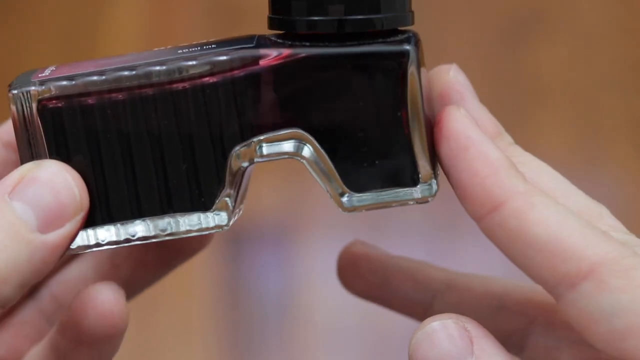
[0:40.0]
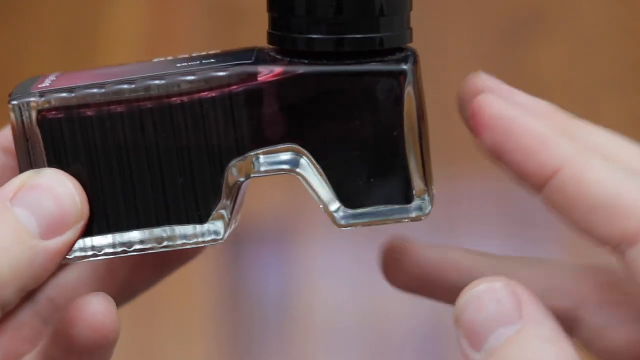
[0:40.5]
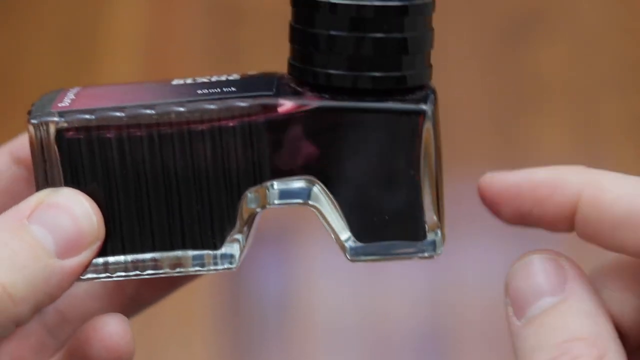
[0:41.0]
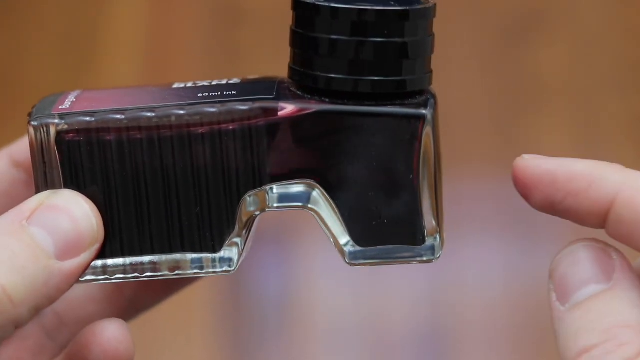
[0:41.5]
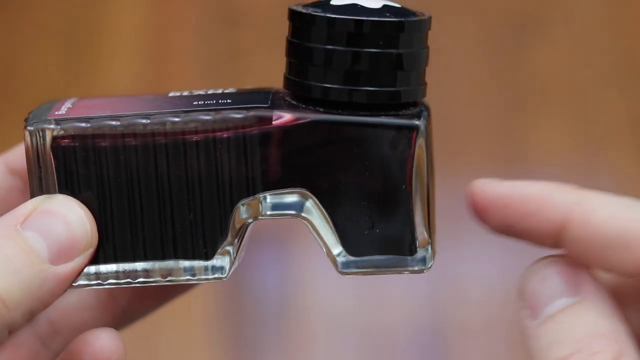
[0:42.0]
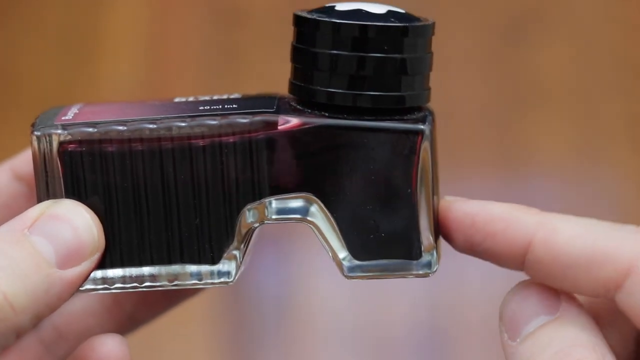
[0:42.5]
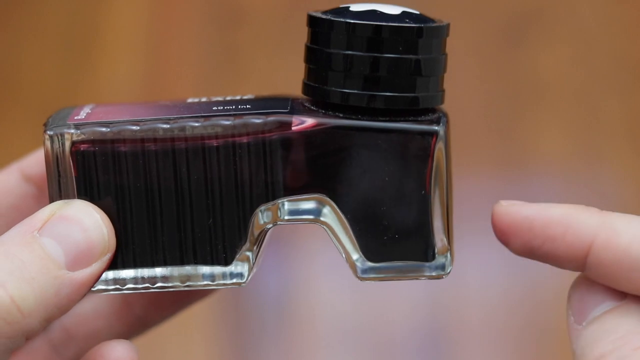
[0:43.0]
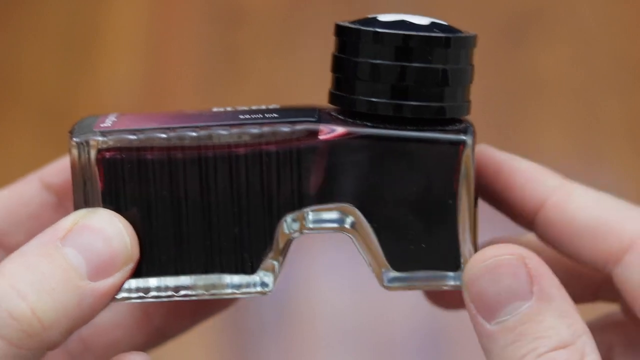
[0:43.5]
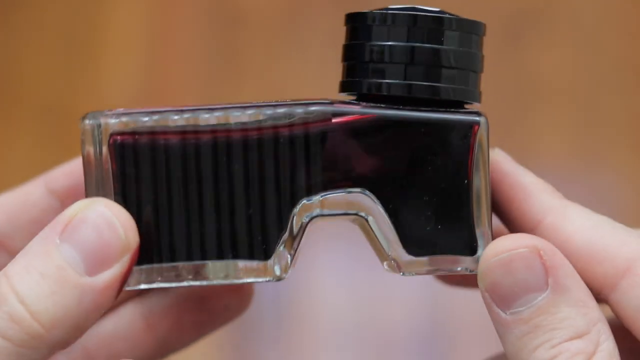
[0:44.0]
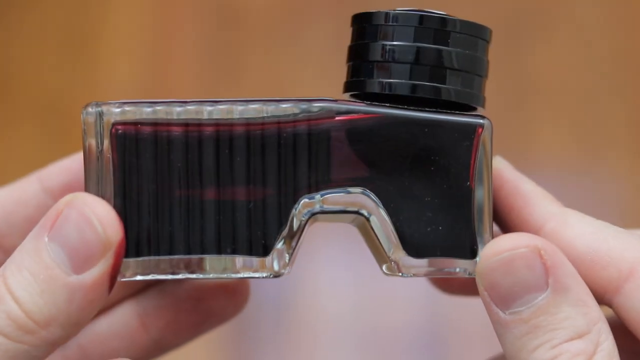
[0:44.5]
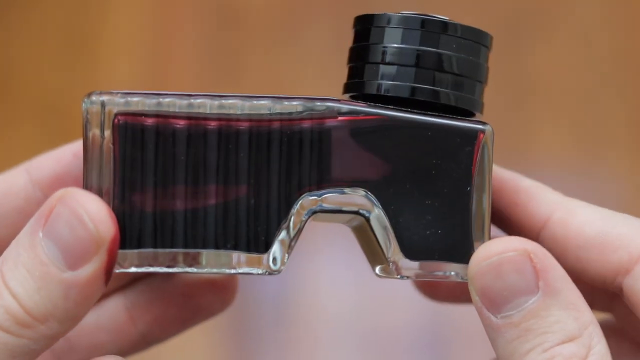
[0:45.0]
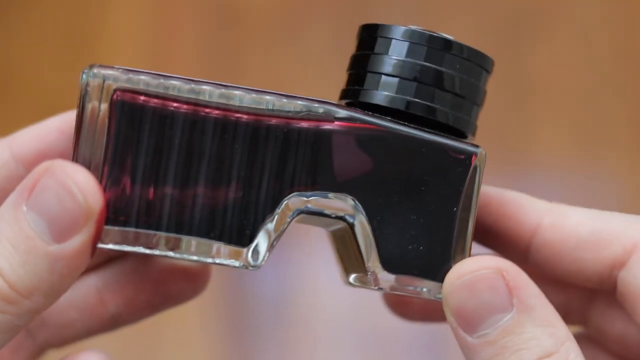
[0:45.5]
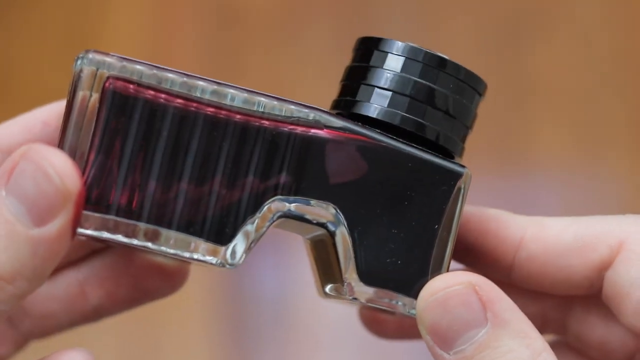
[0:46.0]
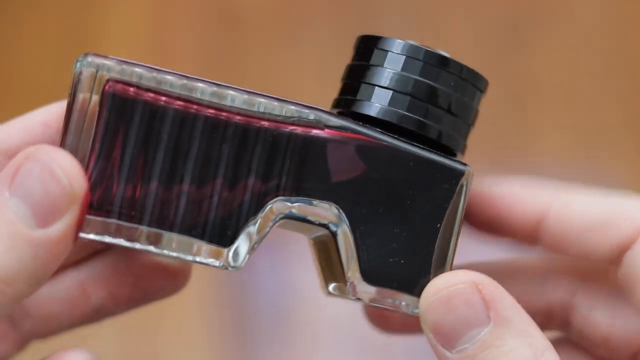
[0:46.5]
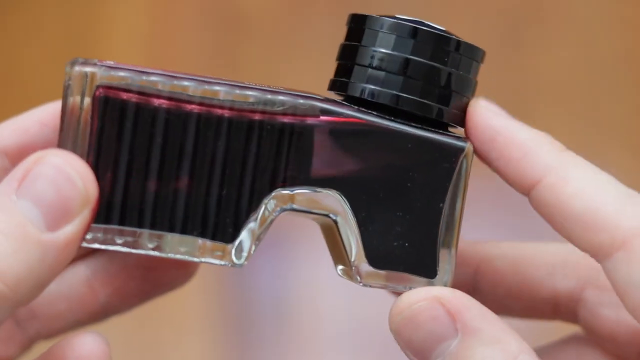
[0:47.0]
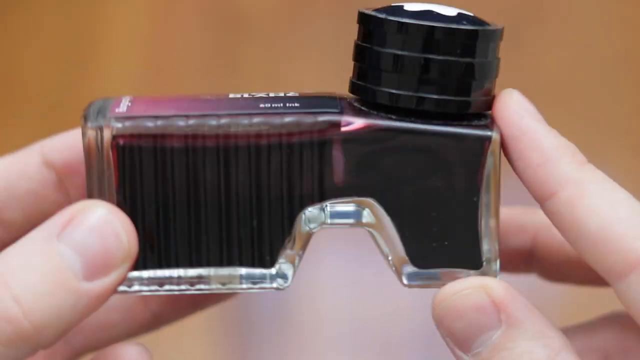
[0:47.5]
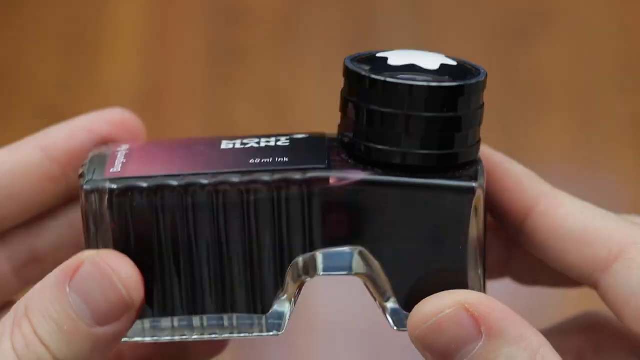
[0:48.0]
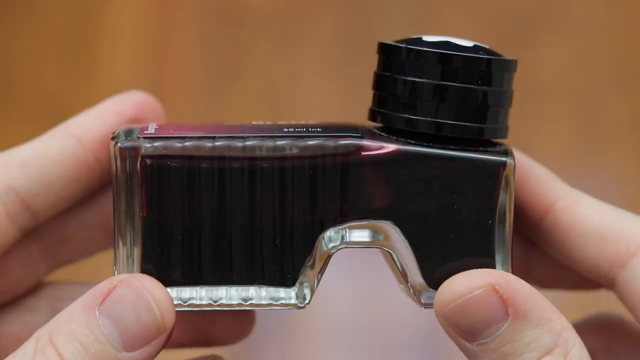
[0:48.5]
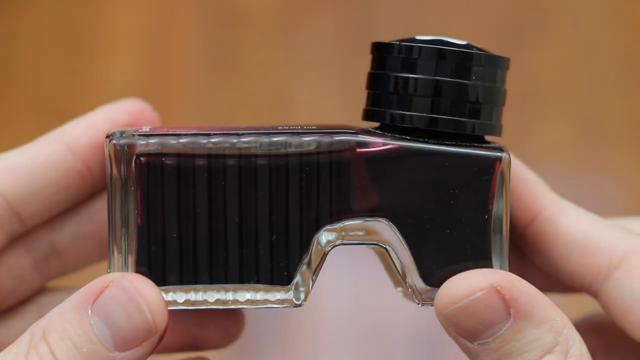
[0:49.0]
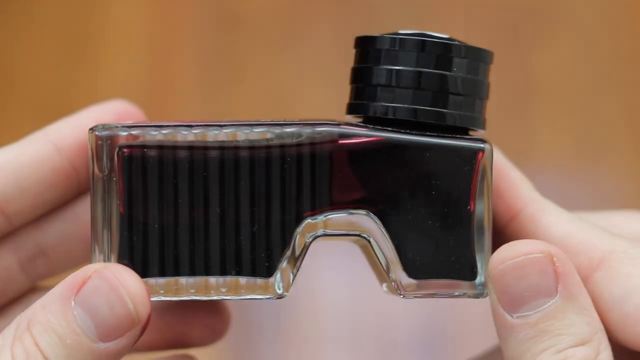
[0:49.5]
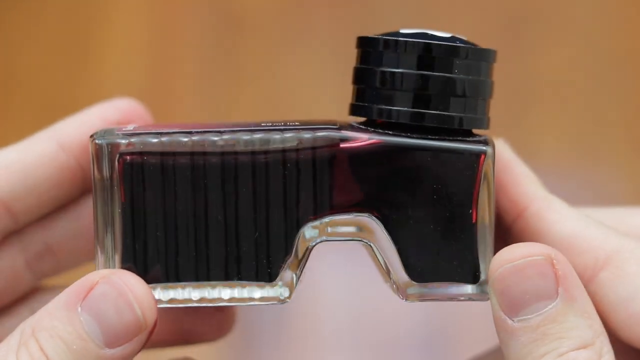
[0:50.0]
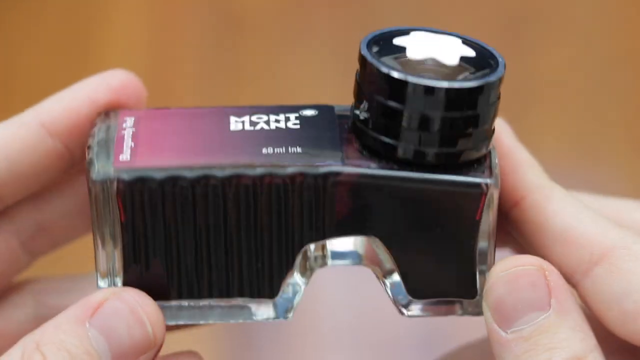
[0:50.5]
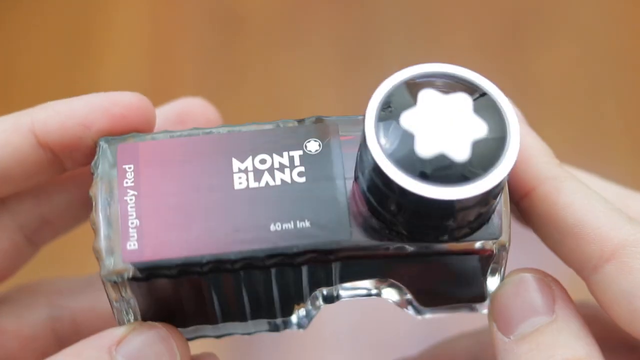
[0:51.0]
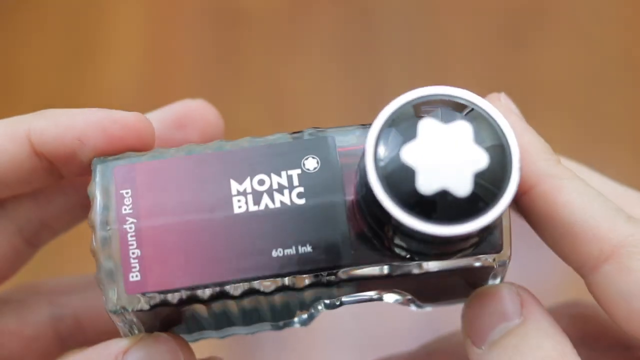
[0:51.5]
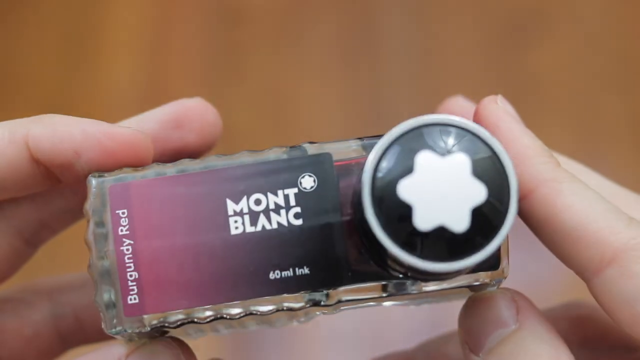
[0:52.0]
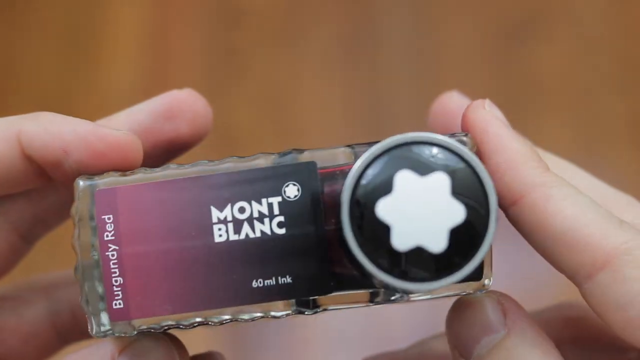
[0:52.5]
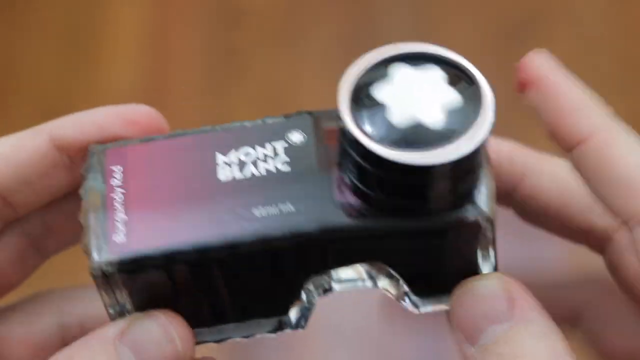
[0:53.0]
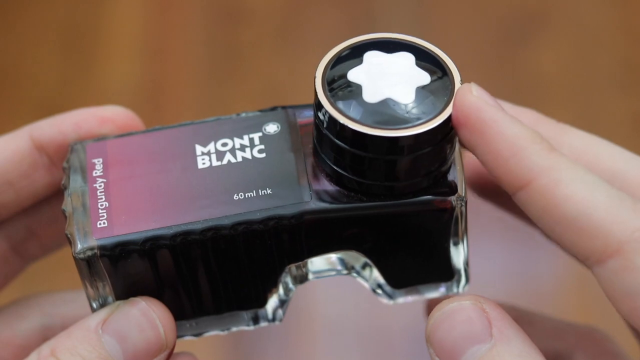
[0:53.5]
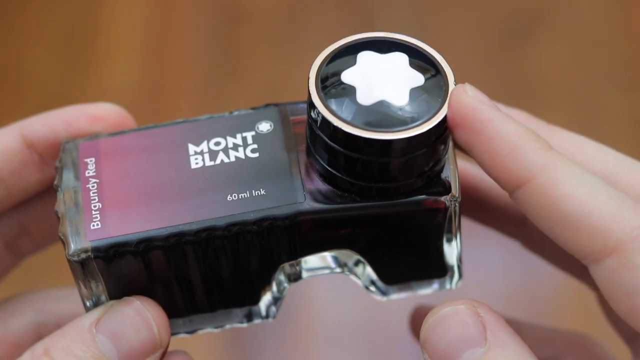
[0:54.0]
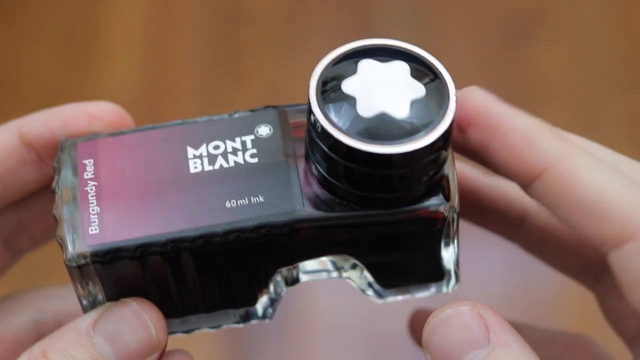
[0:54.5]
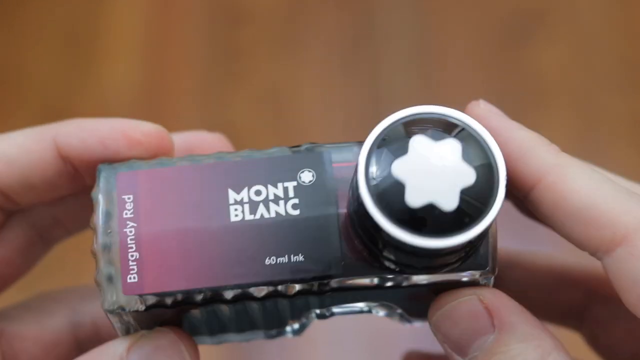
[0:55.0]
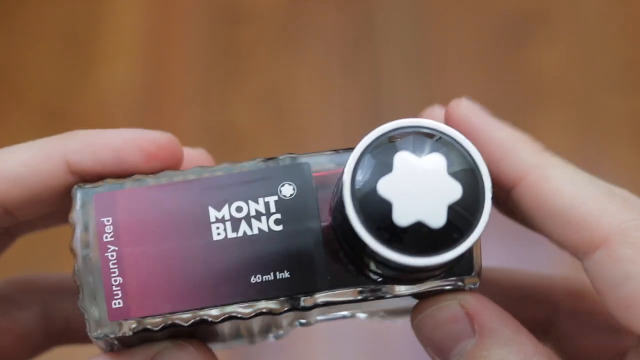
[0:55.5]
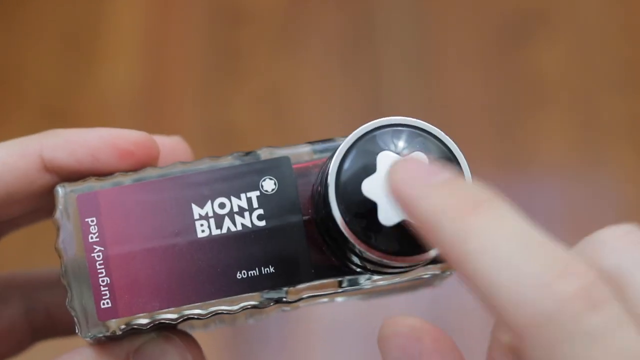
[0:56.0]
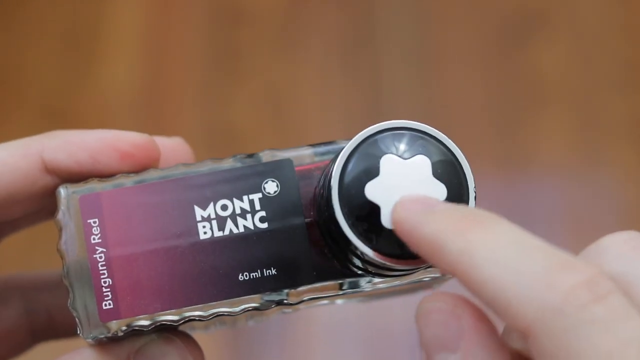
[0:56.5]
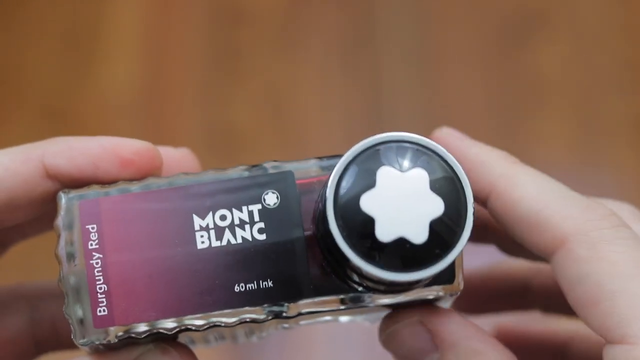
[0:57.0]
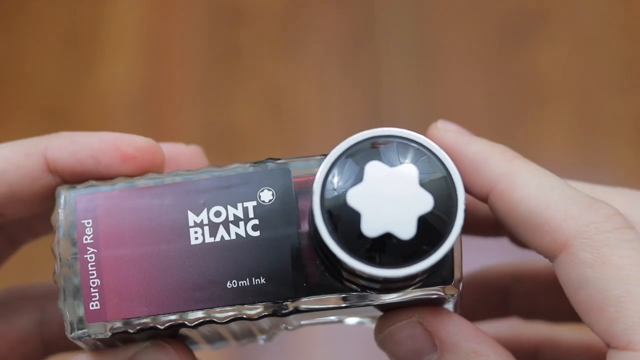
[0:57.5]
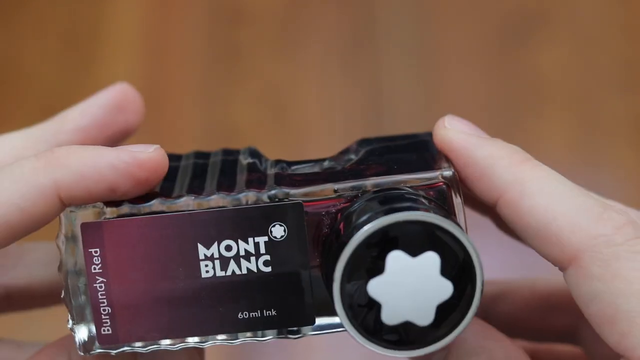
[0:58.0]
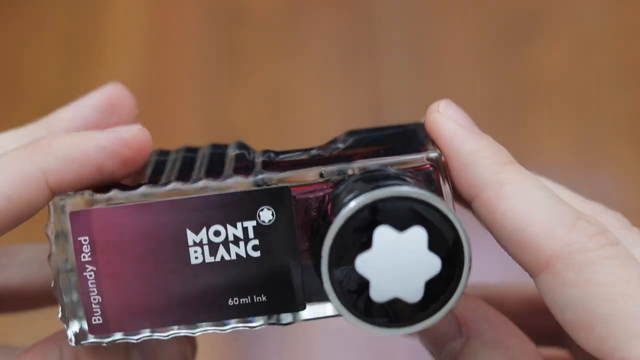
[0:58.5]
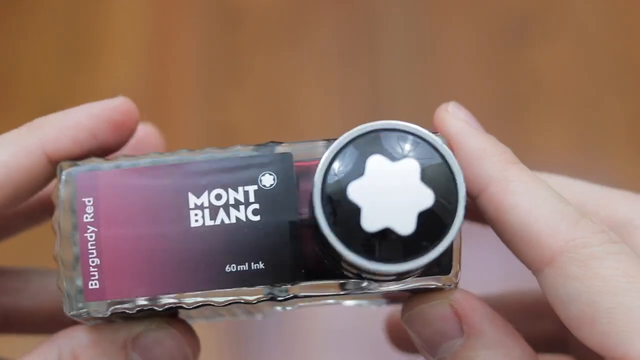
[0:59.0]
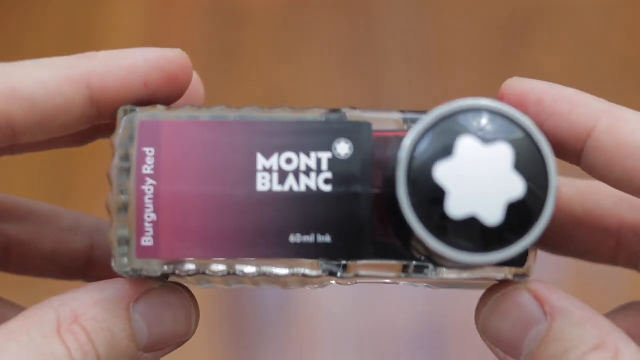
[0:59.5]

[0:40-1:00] The left-hand side of the bottle is tilted downward and the right-hand side slightly up. Keeping his hold on the left-hand side, the presenter taps the right side of the bottle five times with his right index finger. He then pulls the bottle downward with his right hand approximately 90 degrees and rubs his index finger along the side of the lid. He turns the bottle on its side so the top can be viewed, puts his index and middle fingers on the lid, and taps the emblem on top of the lid. The bottle is briefly turned downward before returning to the position in which it was first shown. The background is noticeably brown but very blurred and nondescript.